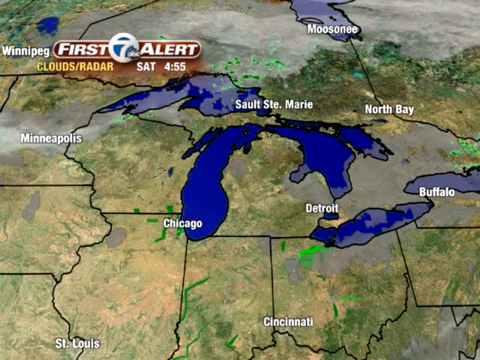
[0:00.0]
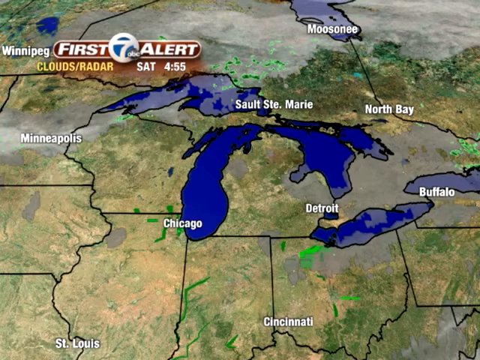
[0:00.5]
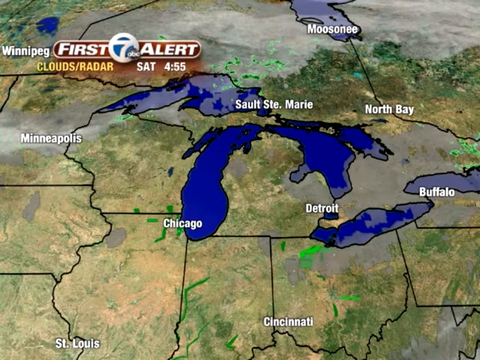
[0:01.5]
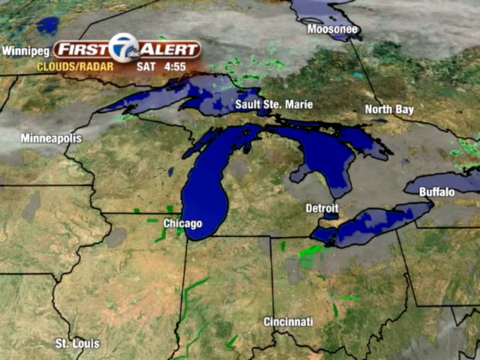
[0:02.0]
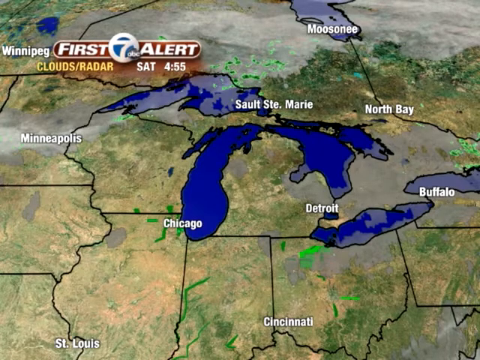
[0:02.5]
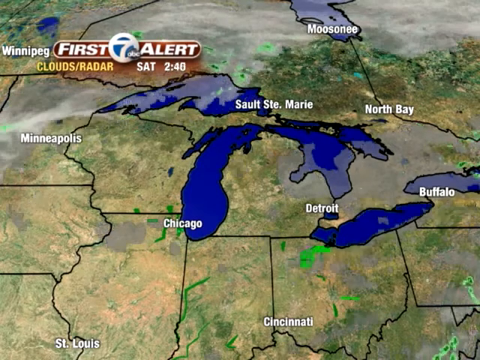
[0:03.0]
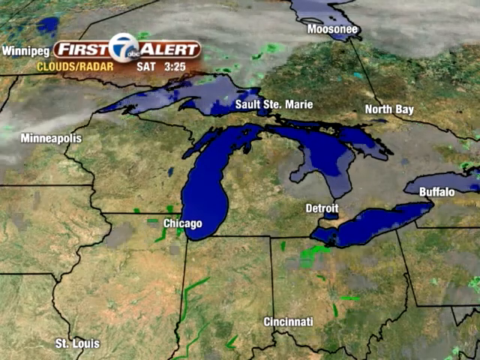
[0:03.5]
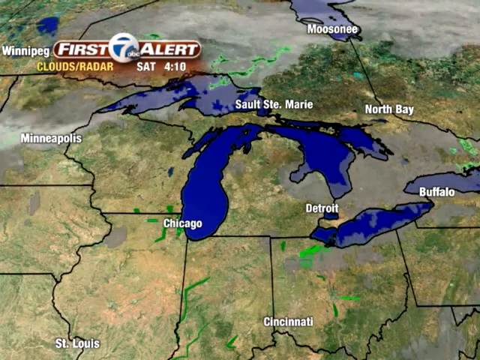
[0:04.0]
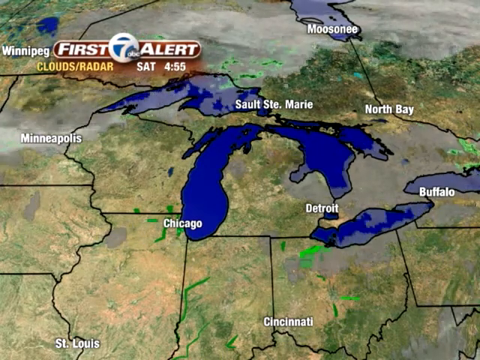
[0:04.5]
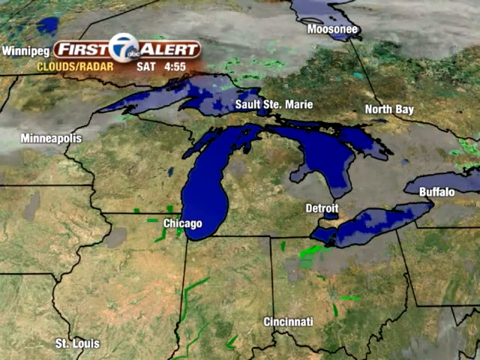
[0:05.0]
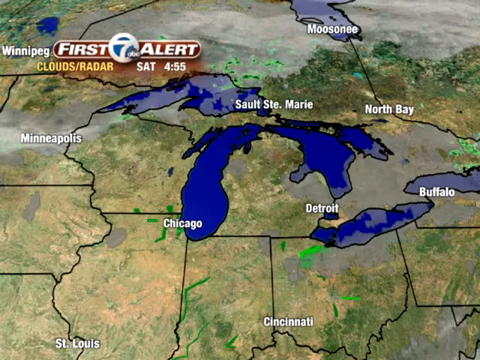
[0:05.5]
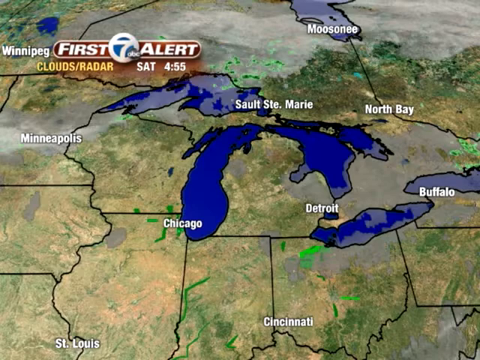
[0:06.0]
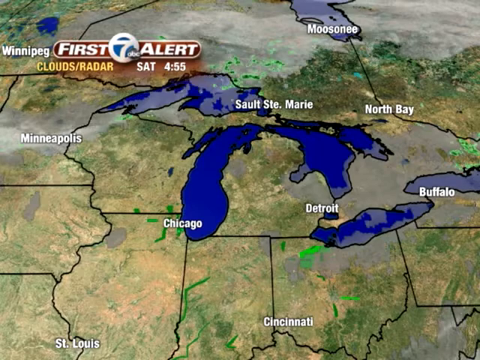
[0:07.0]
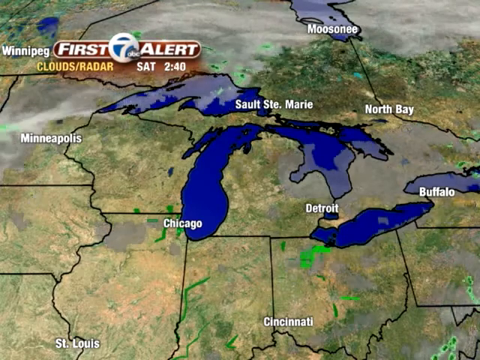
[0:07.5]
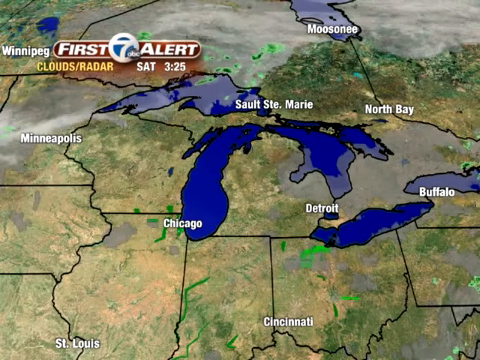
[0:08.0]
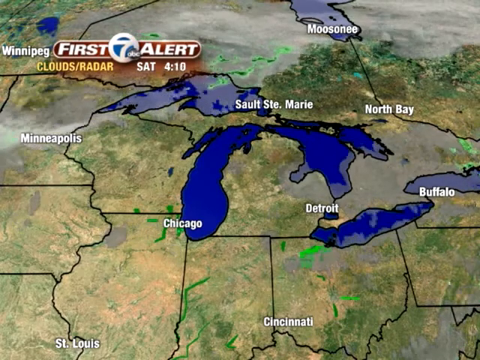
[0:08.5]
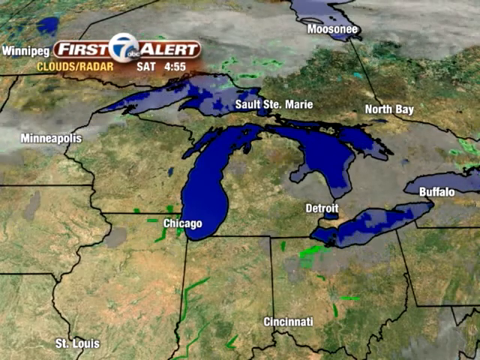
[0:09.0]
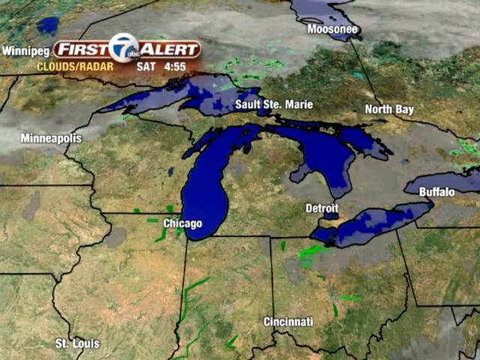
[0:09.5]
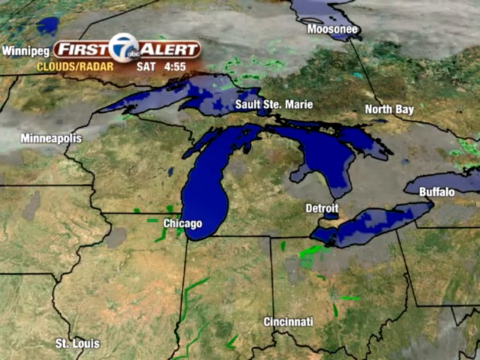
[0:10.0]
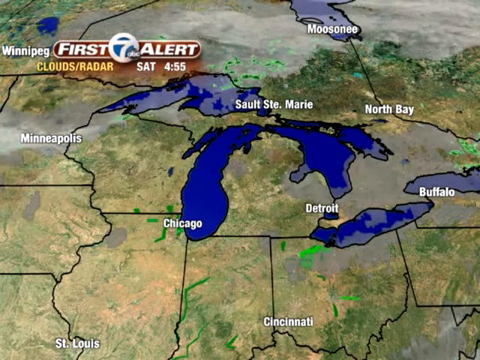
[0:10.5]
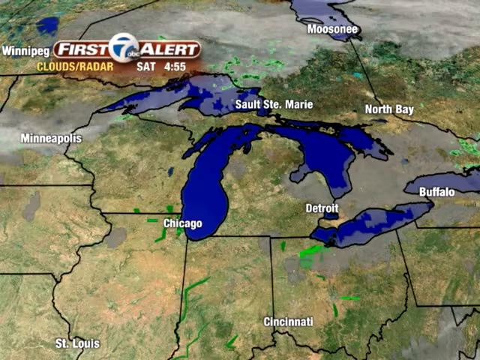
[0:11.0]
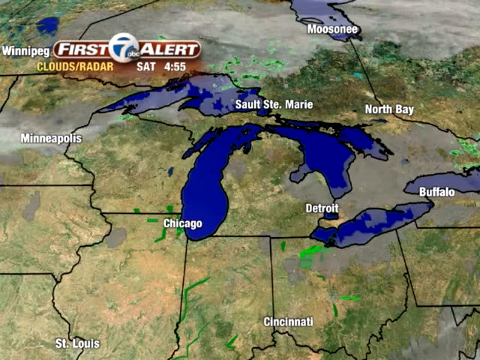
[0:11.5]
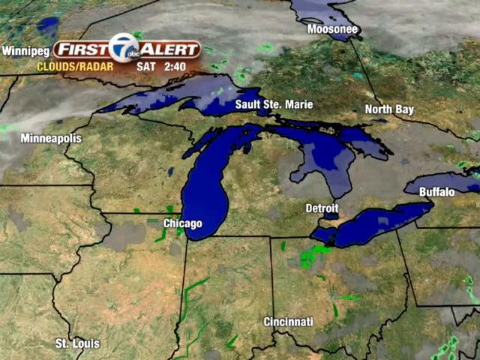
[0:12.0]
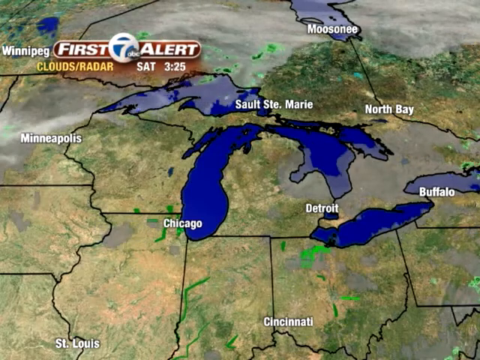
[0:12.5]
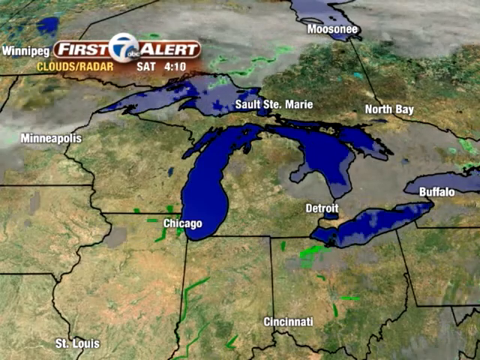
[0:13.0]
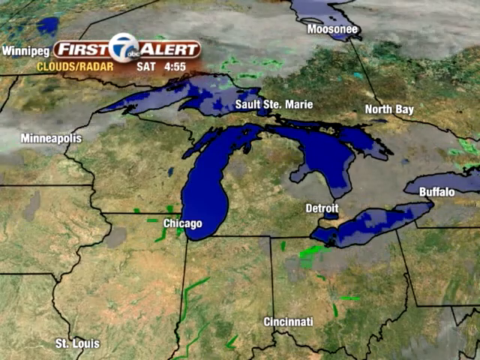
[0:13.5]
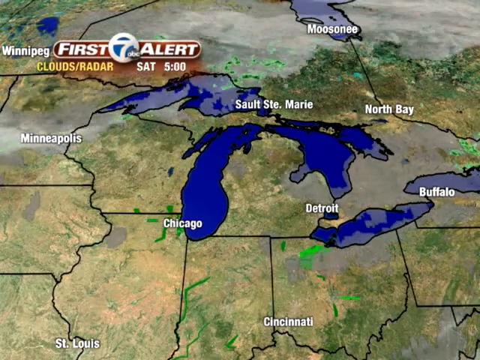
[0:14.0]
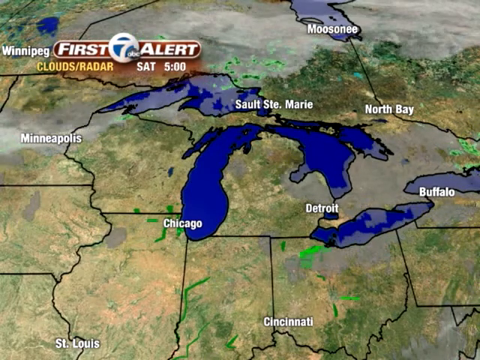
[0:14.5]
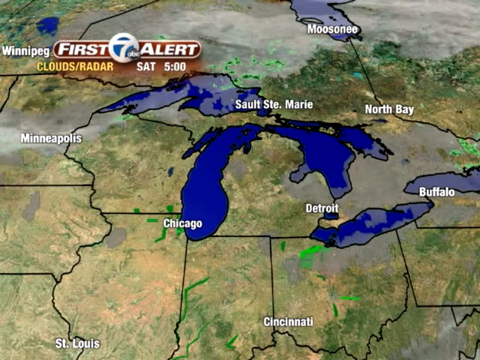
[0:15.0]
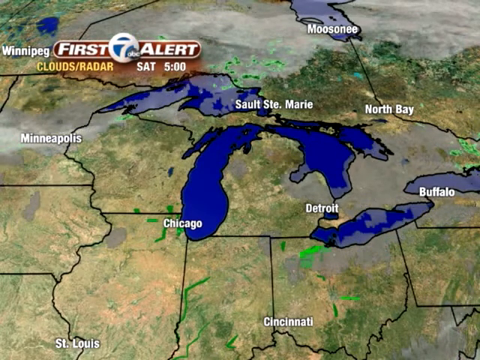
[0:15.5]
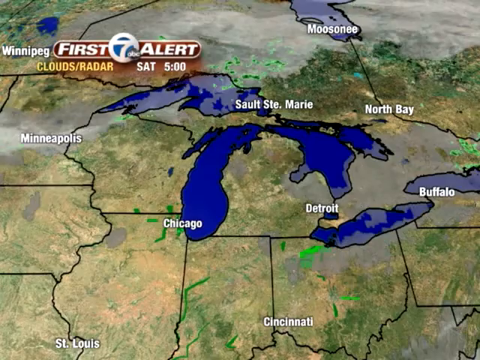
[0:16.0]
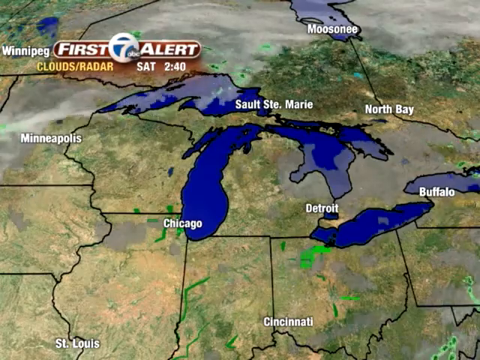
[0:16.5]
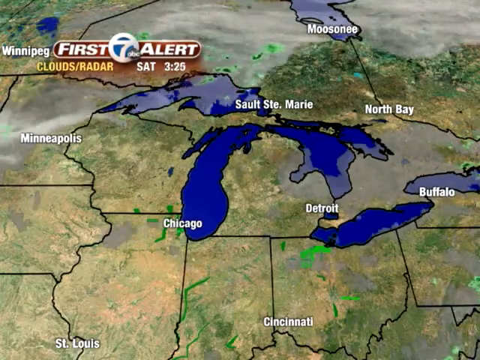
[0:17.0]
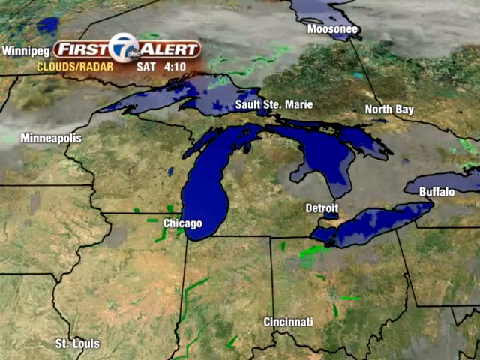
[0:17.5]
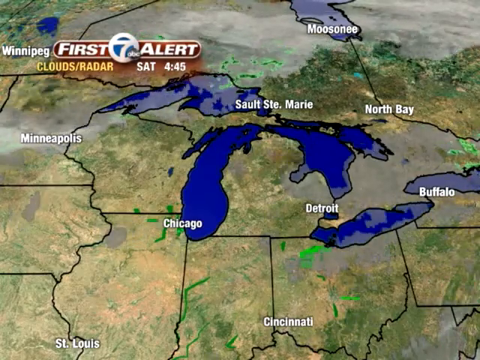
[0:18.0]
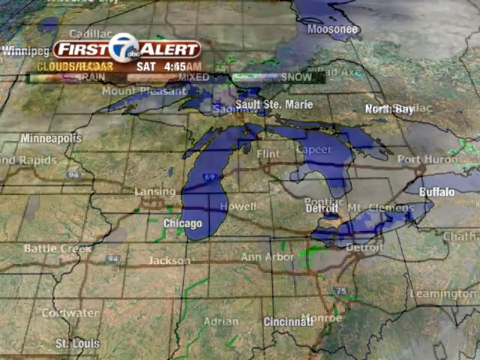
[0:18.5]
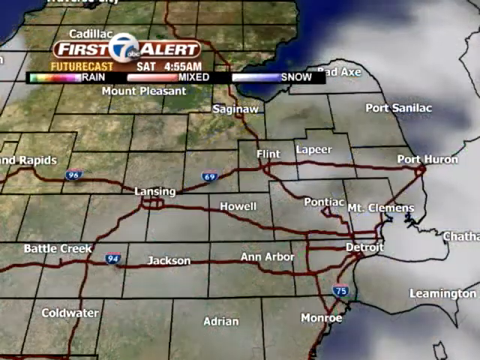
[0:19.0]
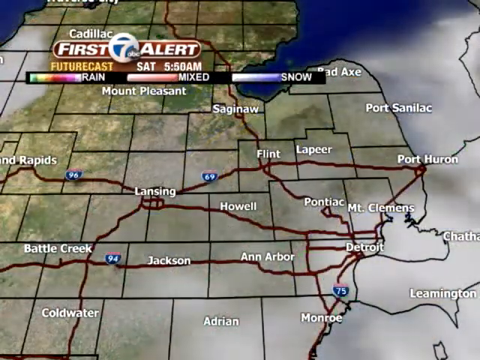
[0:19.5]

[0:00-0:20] A map shows the Great Lakes and the surrounding states, with white text marking cities including Minneapolis, Chicago, Detroit, and Buffalo. In the top left corner the text "first alert" appears, followed by the number seven with an ABC logo on it. Gray clouds are at the top of the map, at the top of the screen. The video then cuts to another image that still shows the map, but this time it seems to show more borders that seem to indicate the counties. White clouds are on the right side, and in the top right corner one of the Great Lakes is in blue. This map shows more white text for cities, including Ann Arbor, Lansing, and Jackson, and red lines on the map indicate roads or freeways.